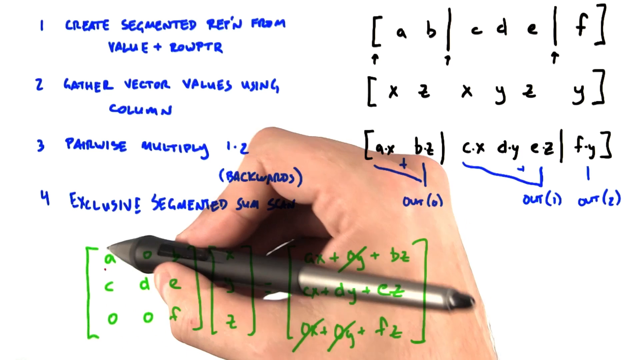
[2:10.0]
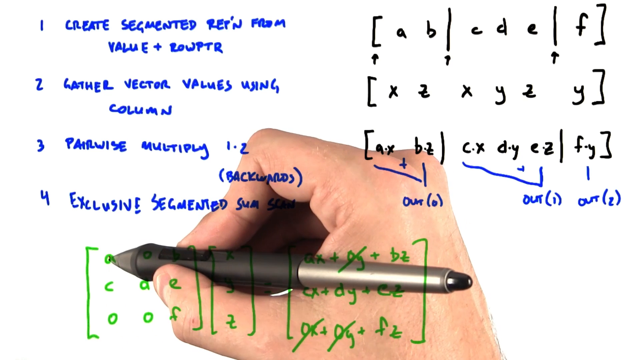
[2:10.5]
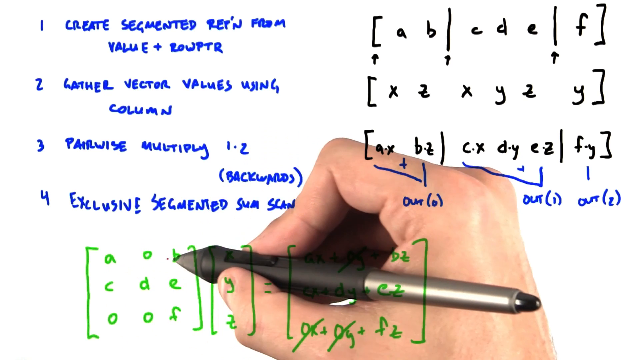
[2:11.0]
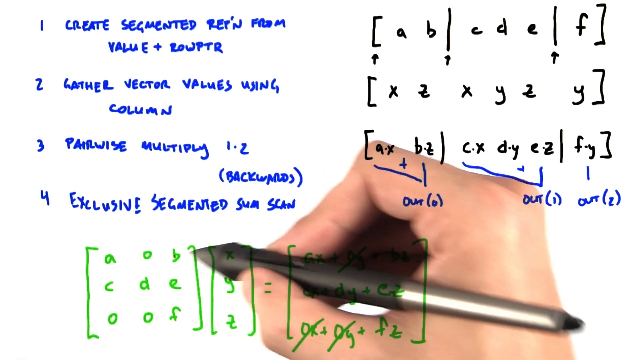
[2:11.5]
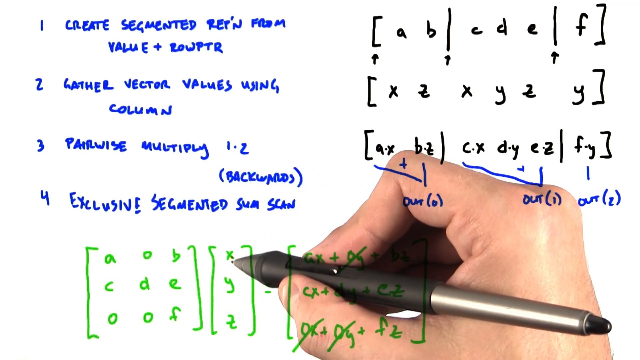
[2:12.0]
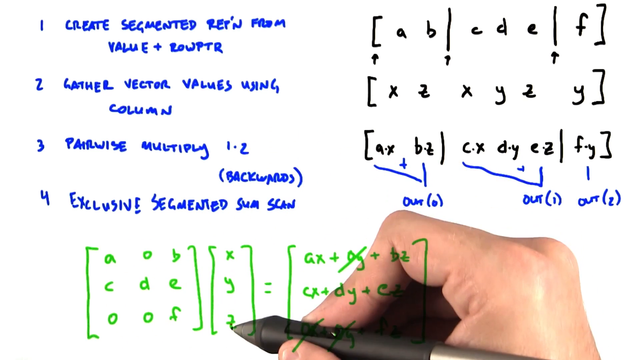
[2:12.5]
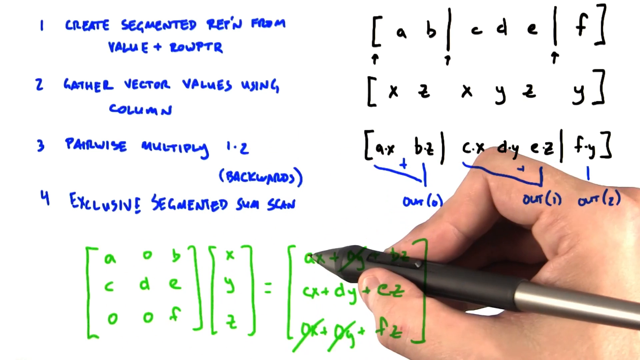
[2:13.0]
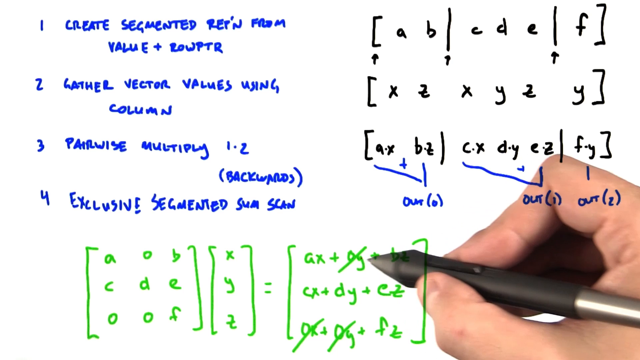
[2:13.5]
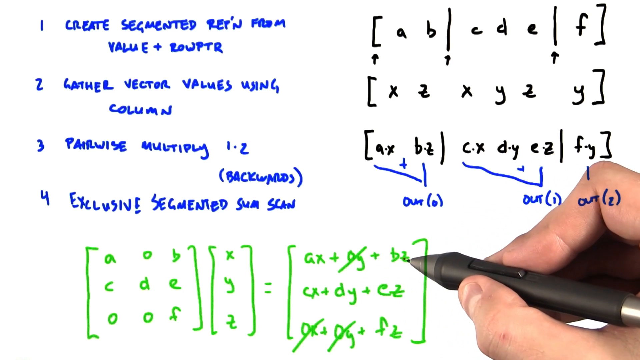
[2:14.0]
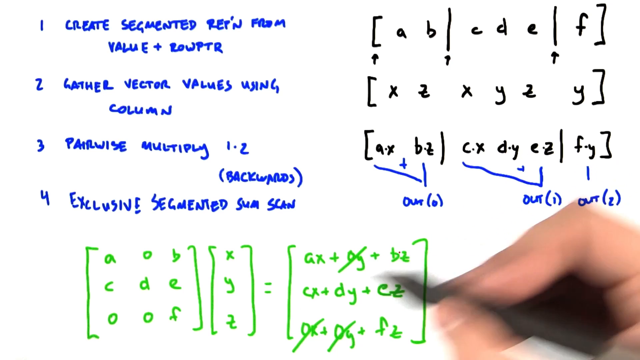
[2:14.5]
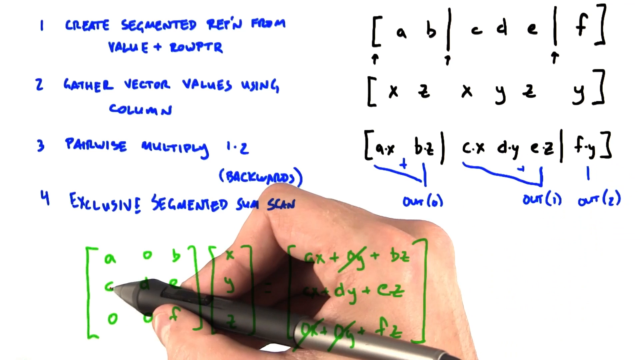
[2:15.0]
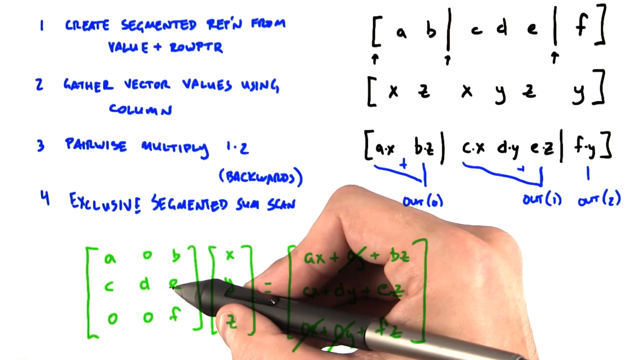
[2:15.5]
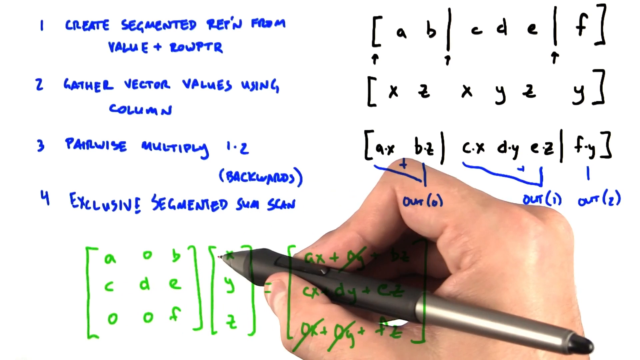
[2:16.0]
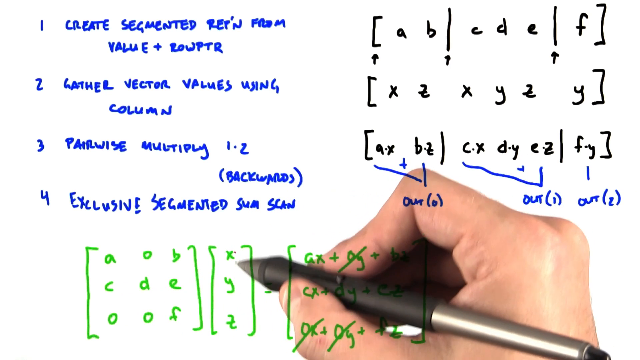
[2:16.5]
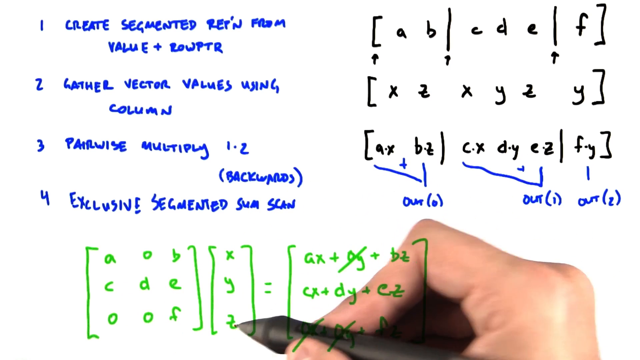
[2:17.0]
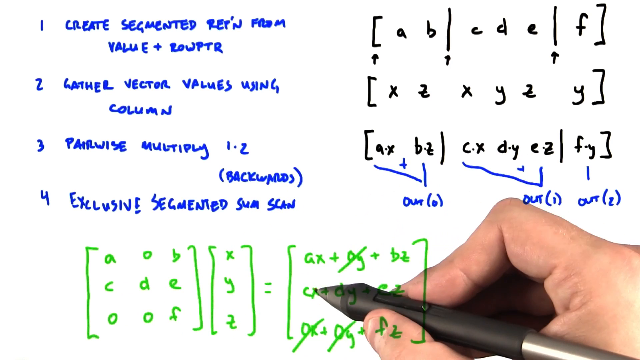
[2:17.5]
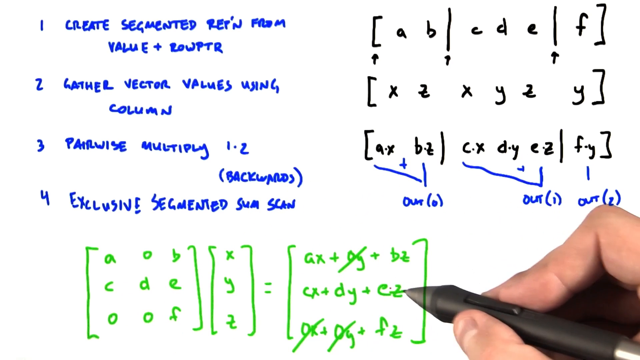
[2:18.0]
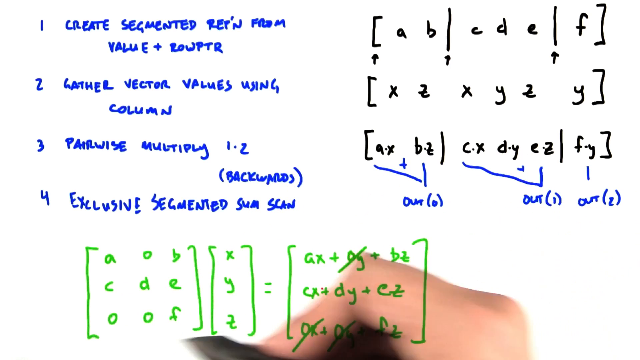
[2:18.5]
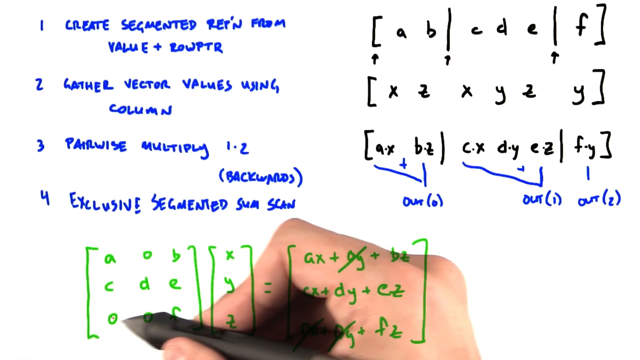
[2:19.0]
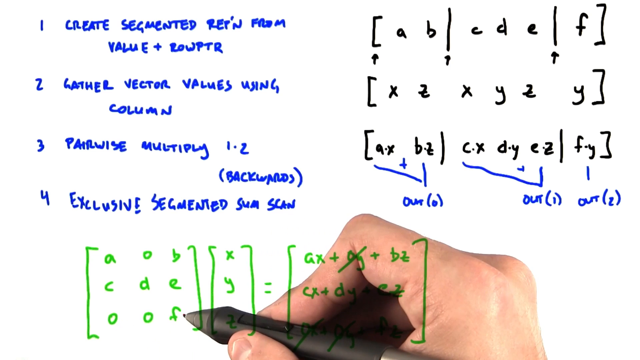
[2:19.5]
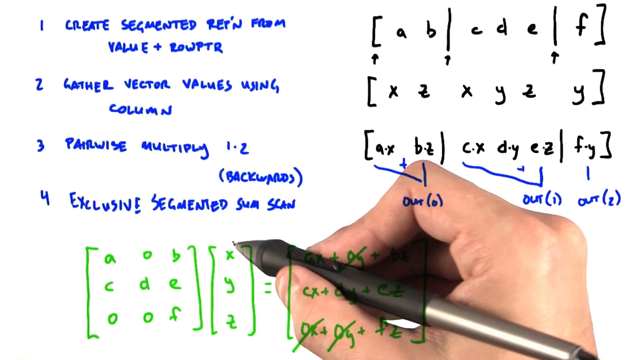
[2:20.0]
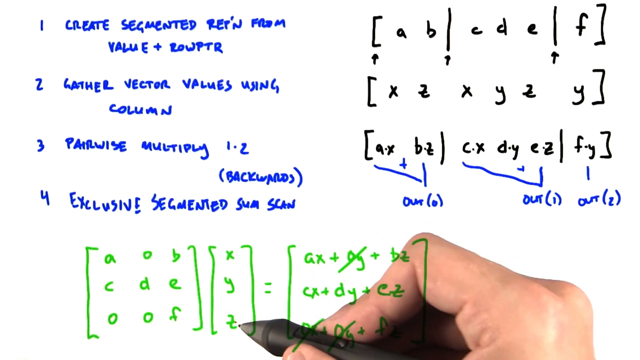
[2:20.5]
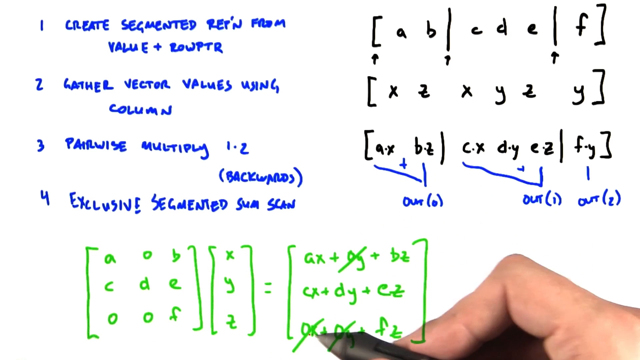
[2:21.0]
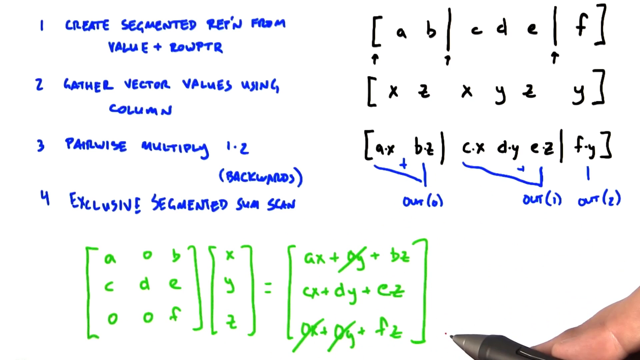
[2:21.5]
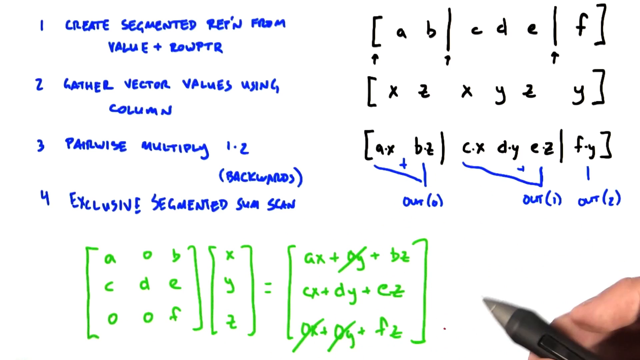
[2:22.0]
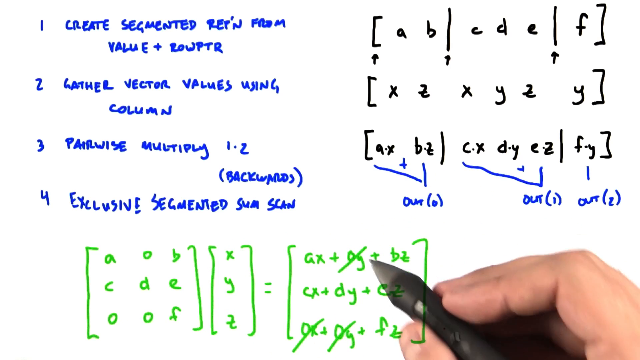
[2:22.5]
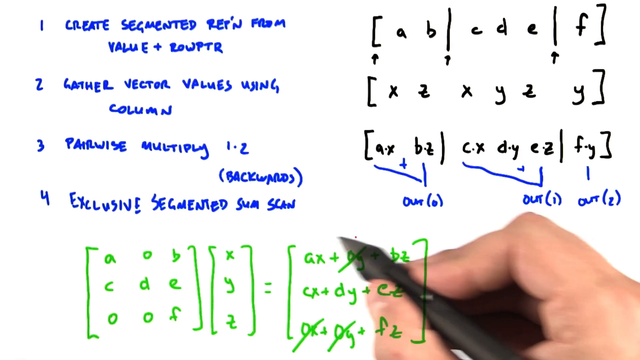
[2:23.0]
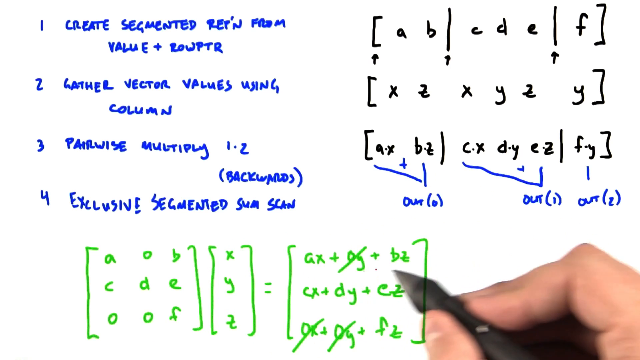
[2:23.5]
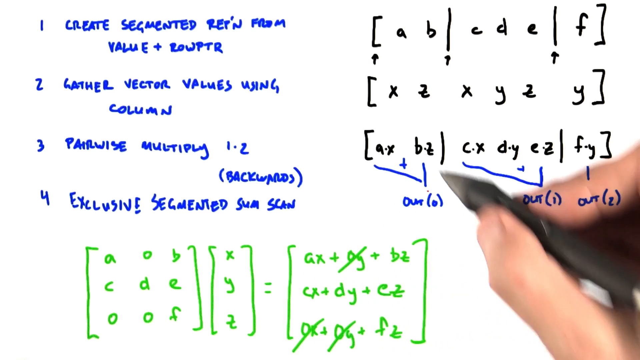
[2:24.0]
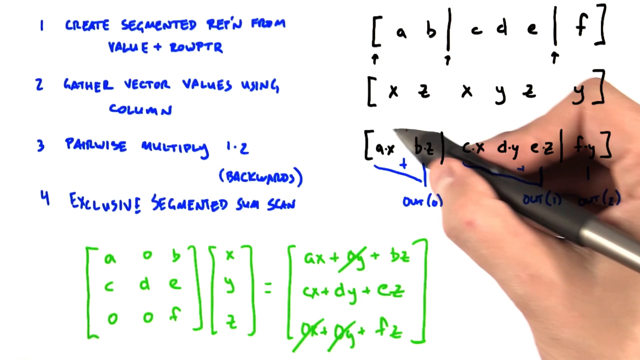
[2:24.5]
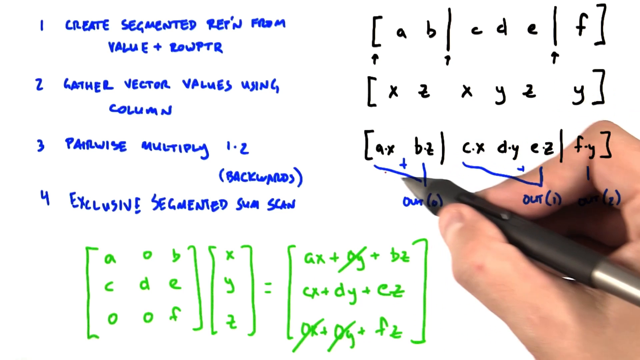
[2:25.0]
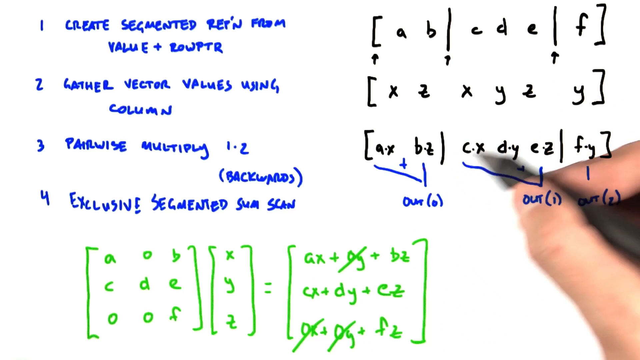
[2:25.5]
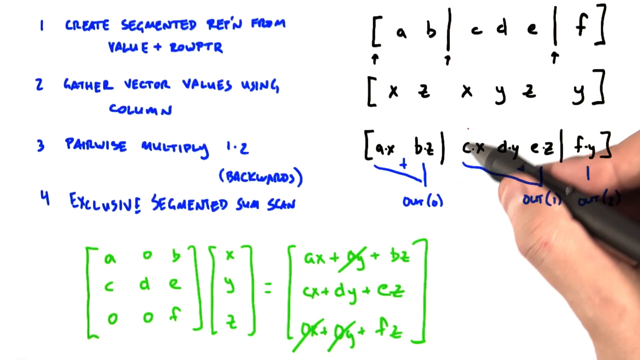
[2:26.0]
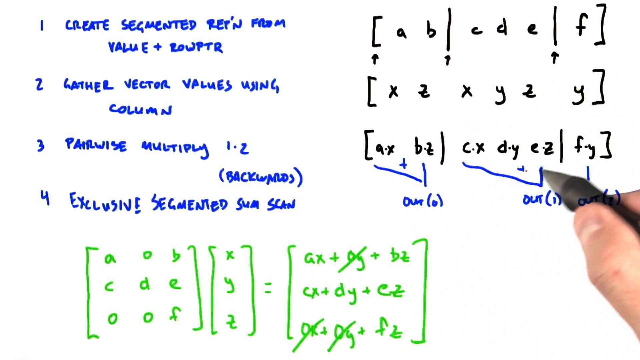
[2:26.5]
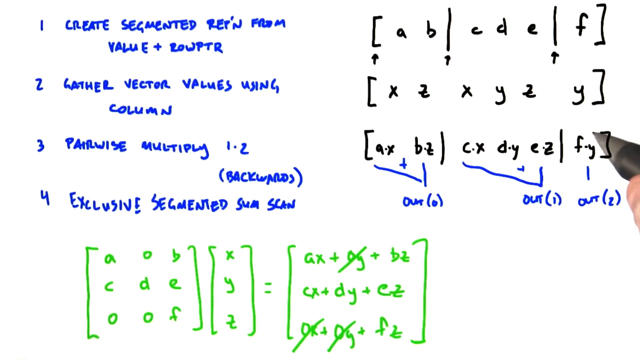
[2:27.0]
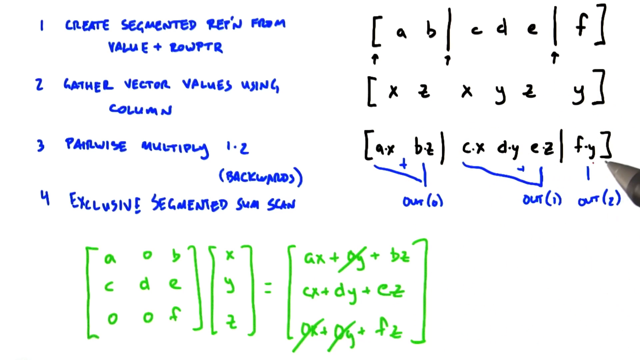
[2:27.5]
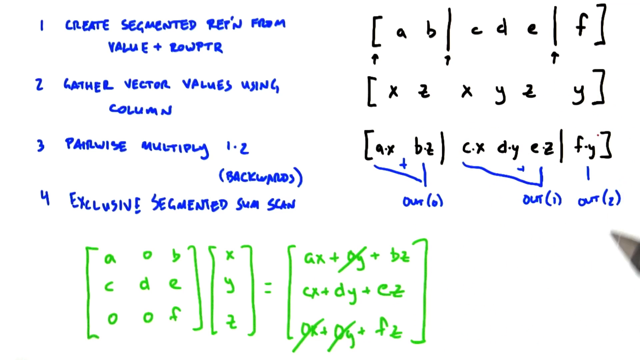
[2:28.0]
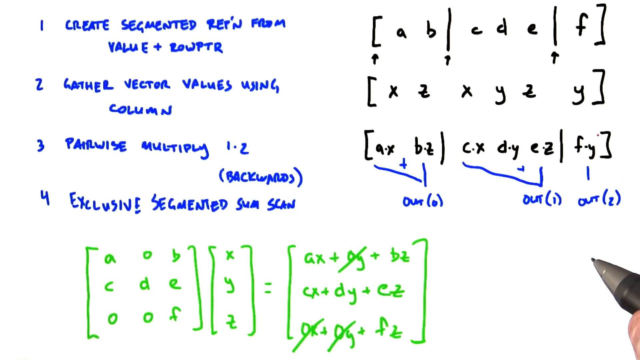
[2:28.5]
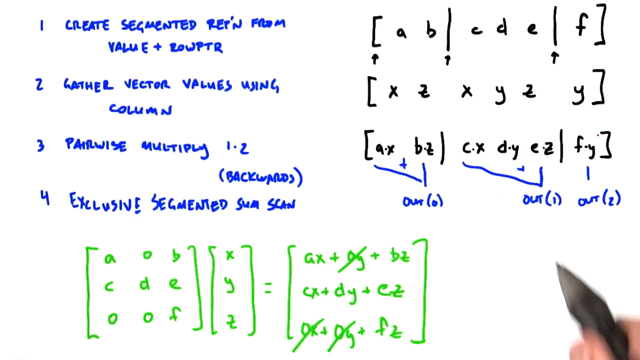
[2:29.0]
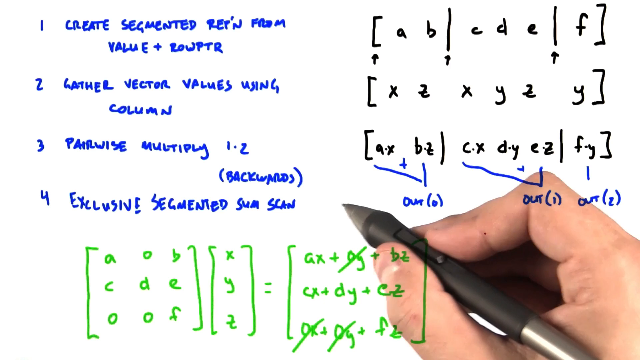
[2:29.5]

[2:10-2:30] Four steps written in blue are on the screen, each with a mathematical equation next to it using letters, symbols, and brackets. Directly under step 4 is an equation written in green, with letters and symbols inside three different brackets, forming one whole equation. The pen gestures to the first set of brackets under step 4, then the second set, then the third. The right hand then uses the pen to go over each row and column once again, circling different areas containing letters and symbols in the brackets. The hand then uses the pen to point out step 3, making circles over the beginning, middle, and end of the step 3 equation.